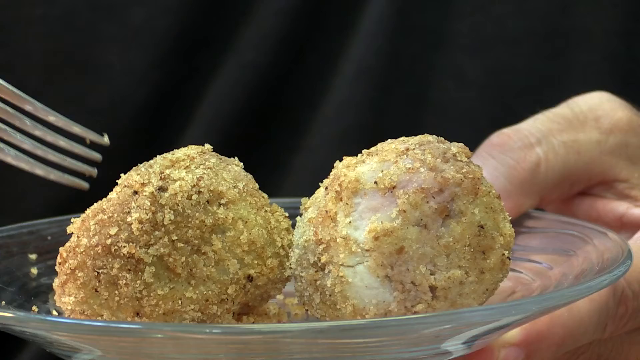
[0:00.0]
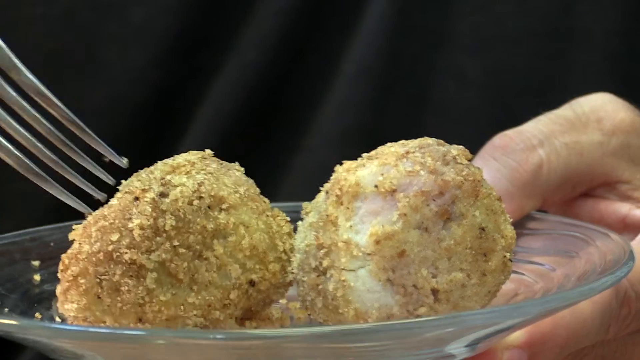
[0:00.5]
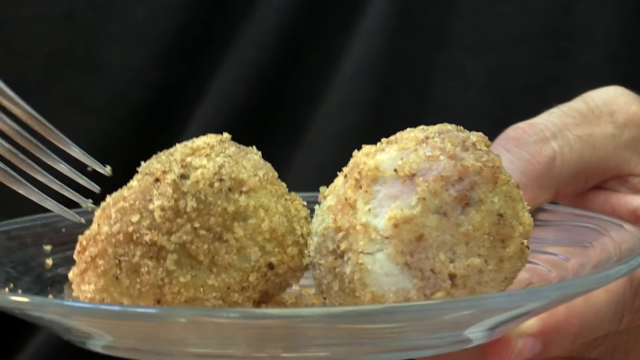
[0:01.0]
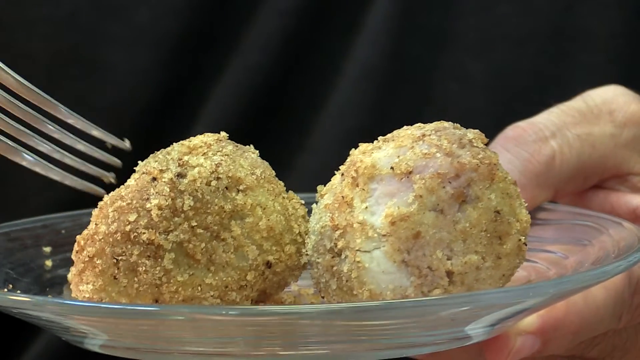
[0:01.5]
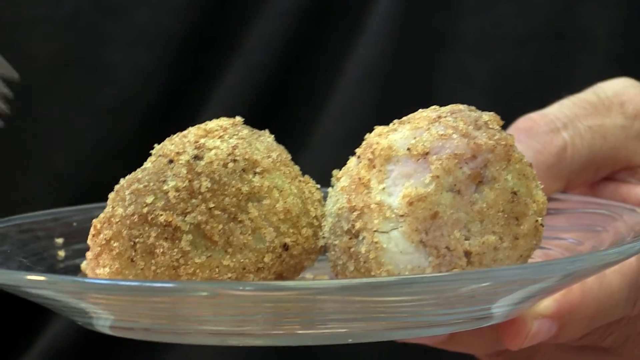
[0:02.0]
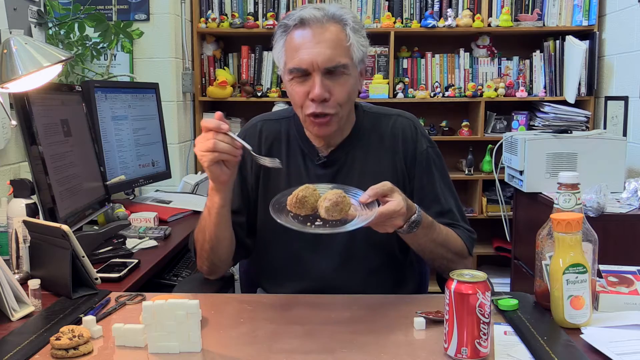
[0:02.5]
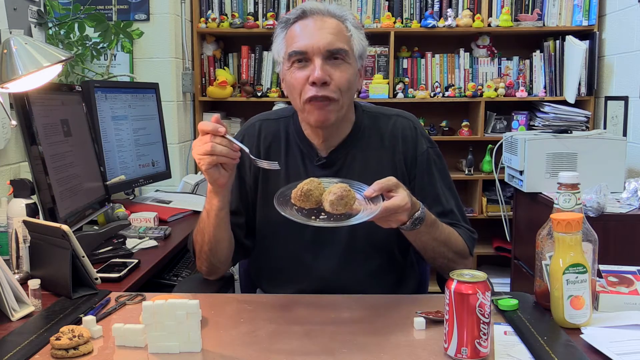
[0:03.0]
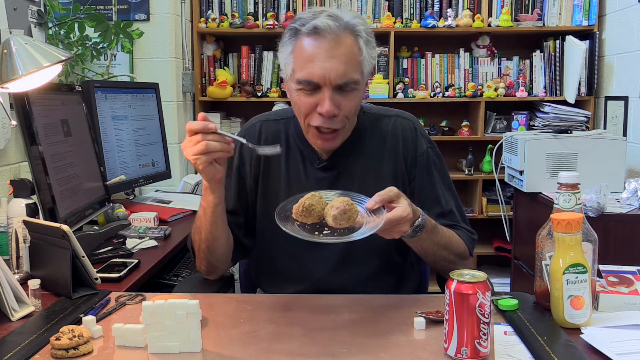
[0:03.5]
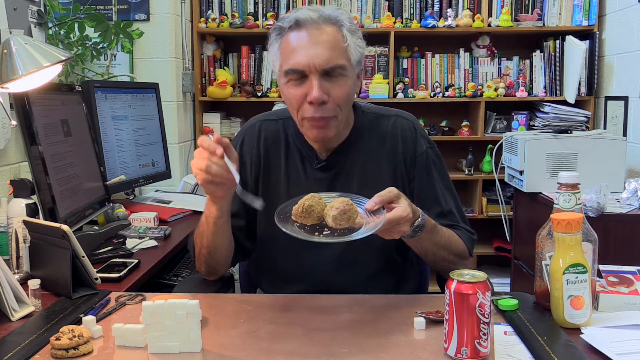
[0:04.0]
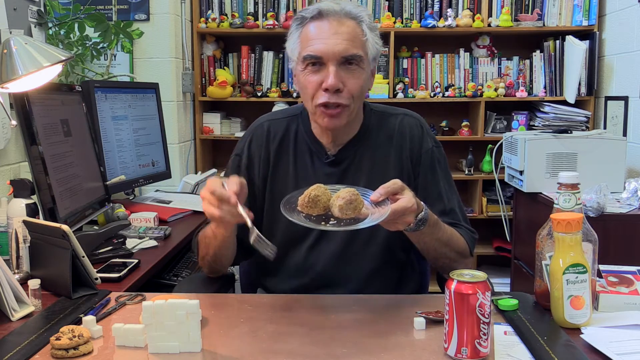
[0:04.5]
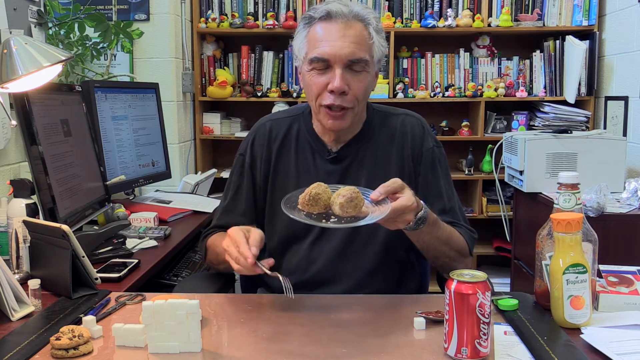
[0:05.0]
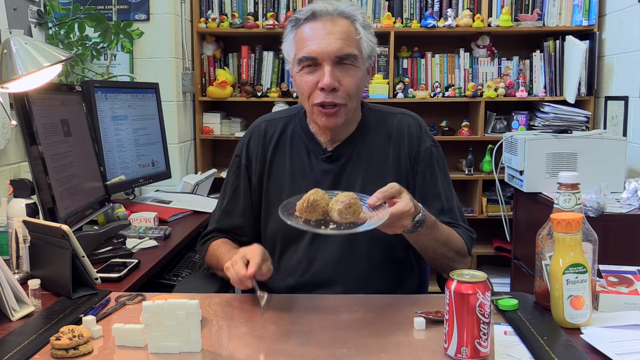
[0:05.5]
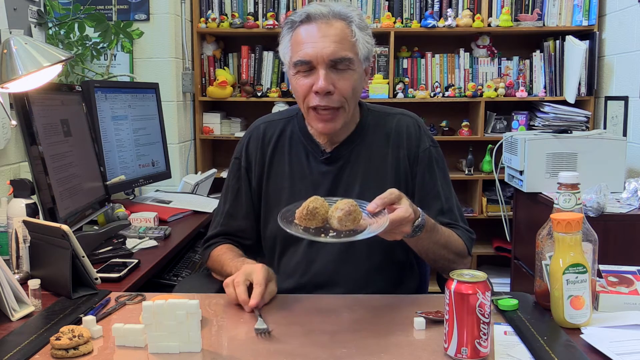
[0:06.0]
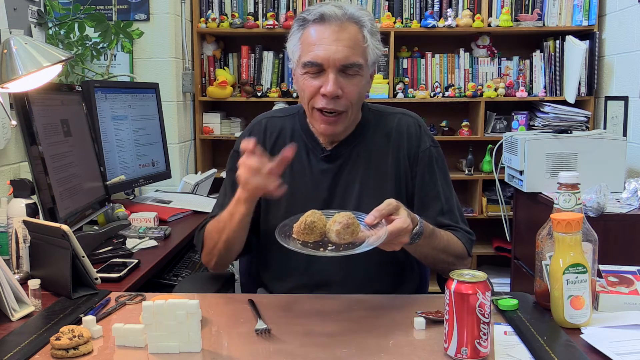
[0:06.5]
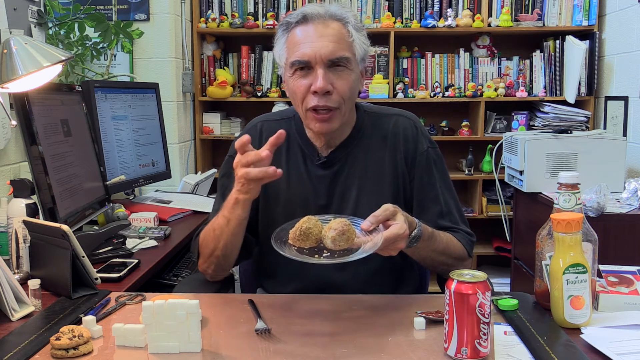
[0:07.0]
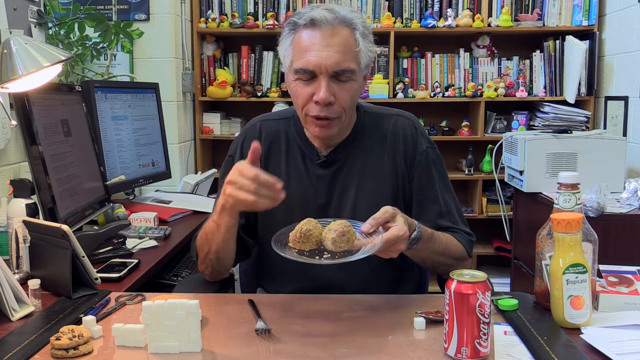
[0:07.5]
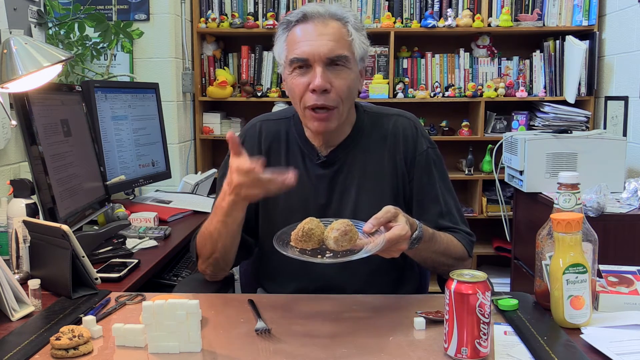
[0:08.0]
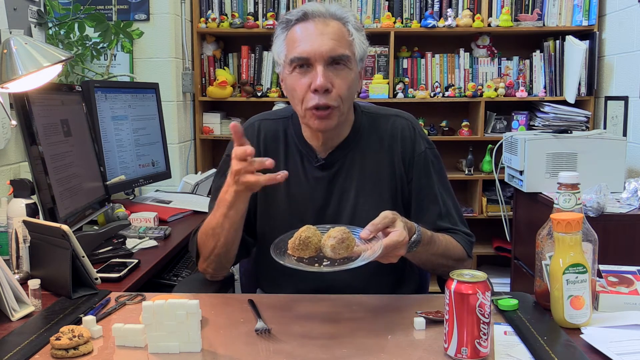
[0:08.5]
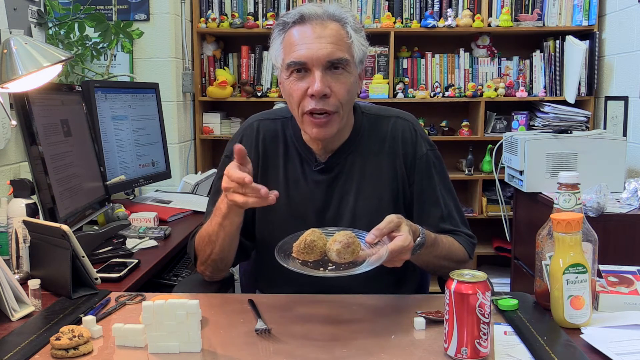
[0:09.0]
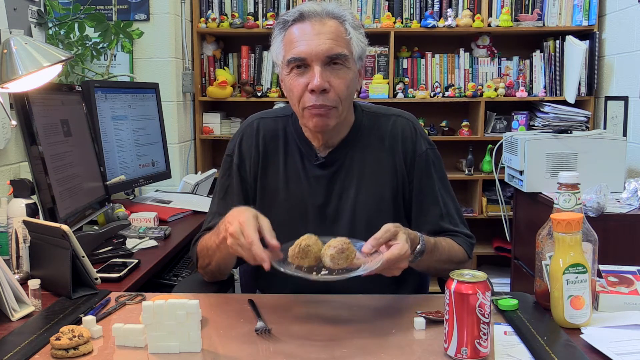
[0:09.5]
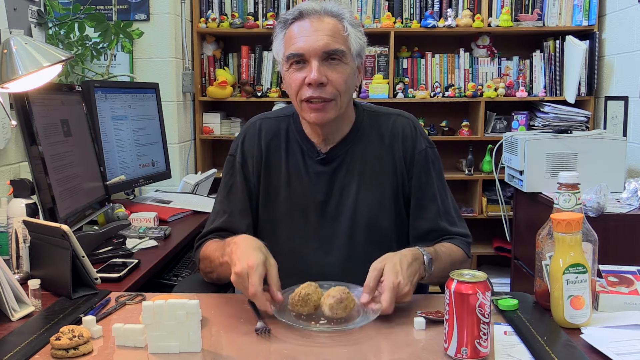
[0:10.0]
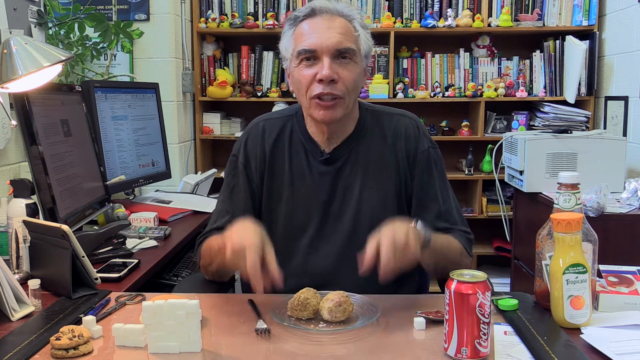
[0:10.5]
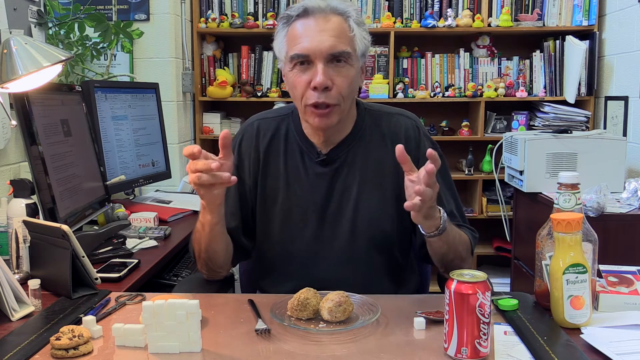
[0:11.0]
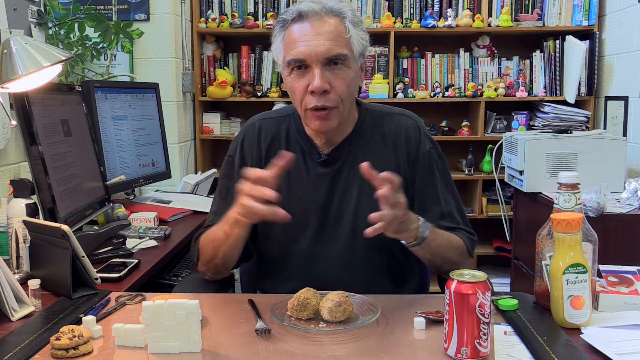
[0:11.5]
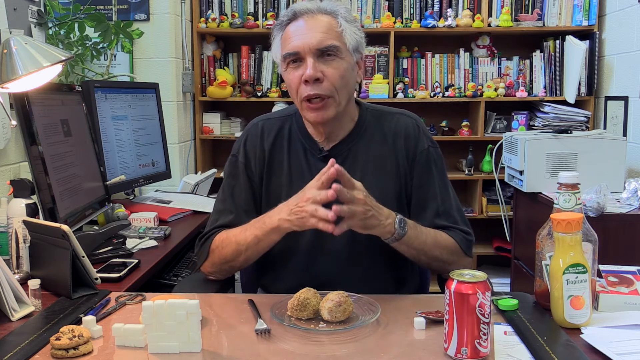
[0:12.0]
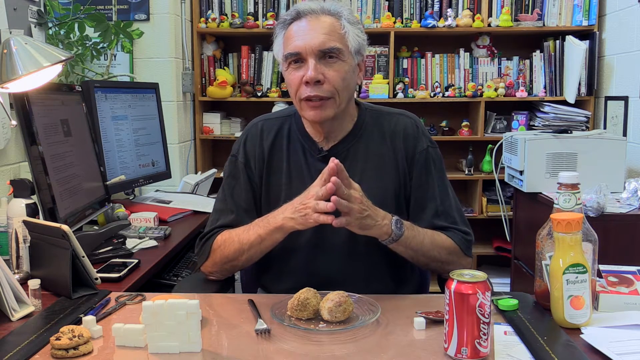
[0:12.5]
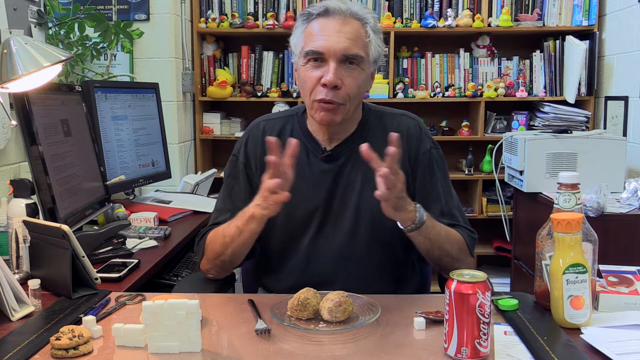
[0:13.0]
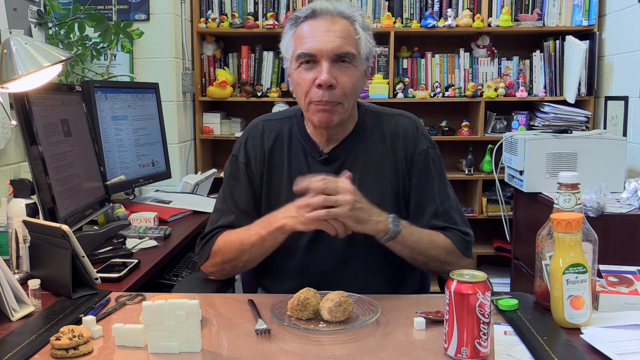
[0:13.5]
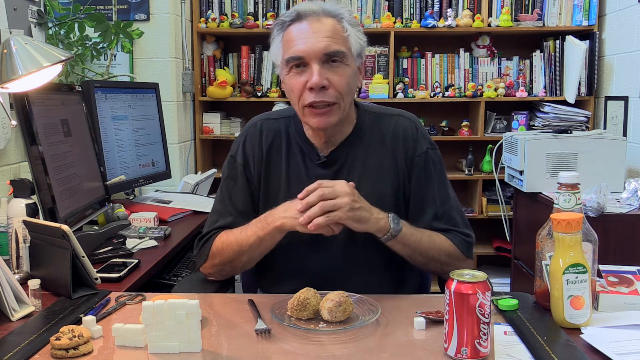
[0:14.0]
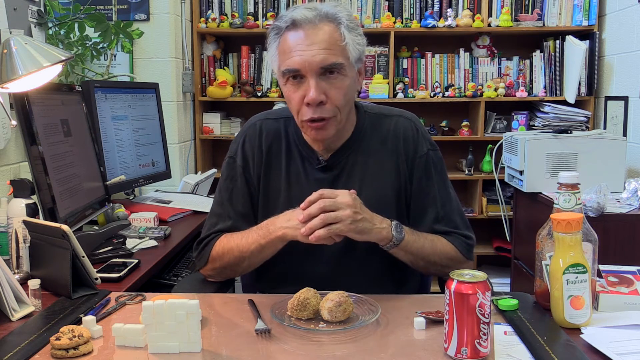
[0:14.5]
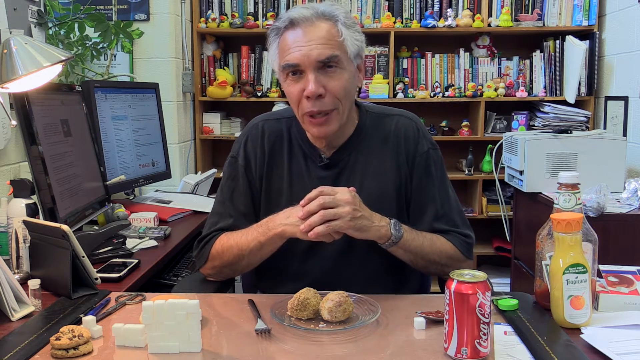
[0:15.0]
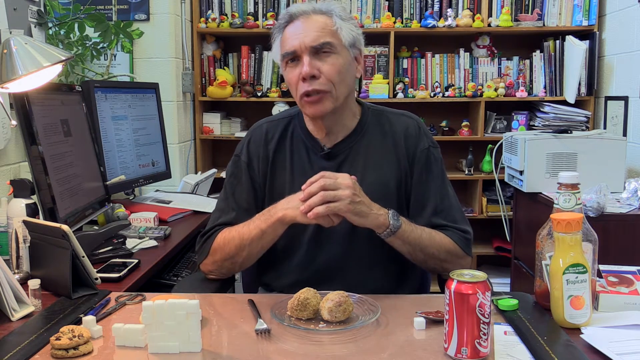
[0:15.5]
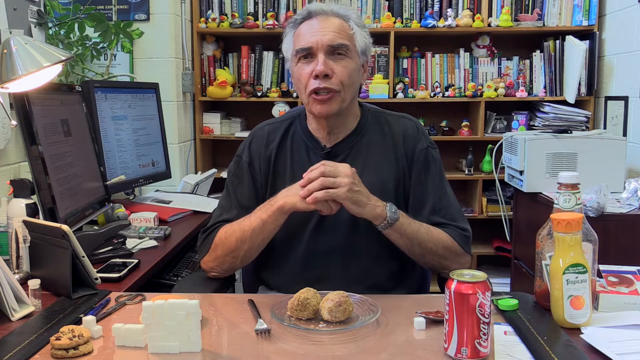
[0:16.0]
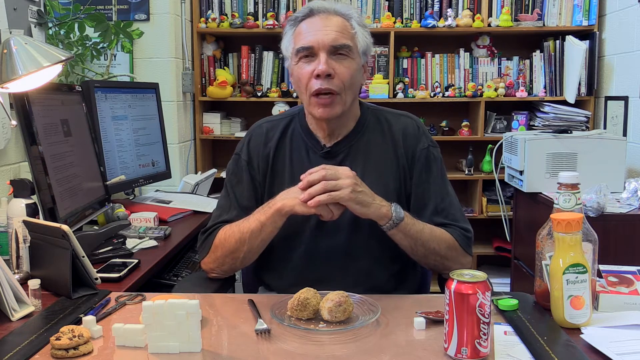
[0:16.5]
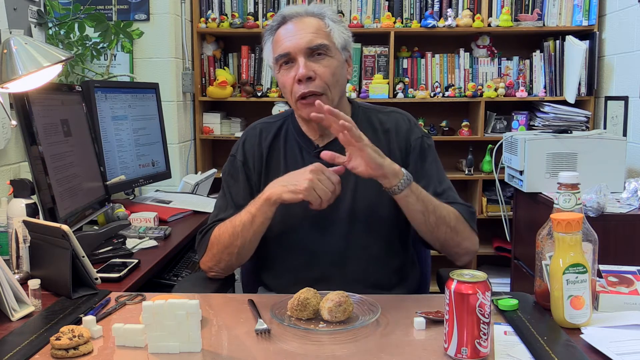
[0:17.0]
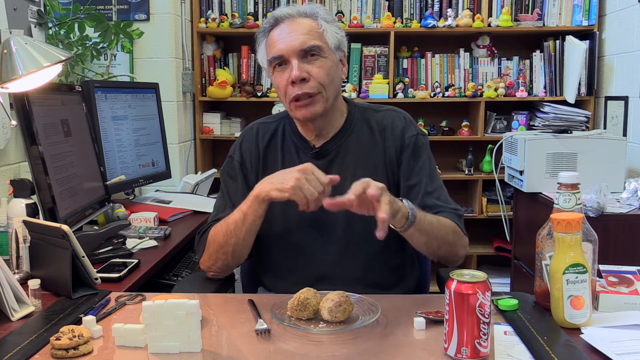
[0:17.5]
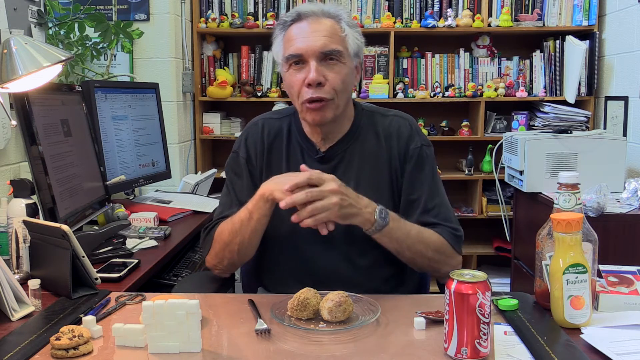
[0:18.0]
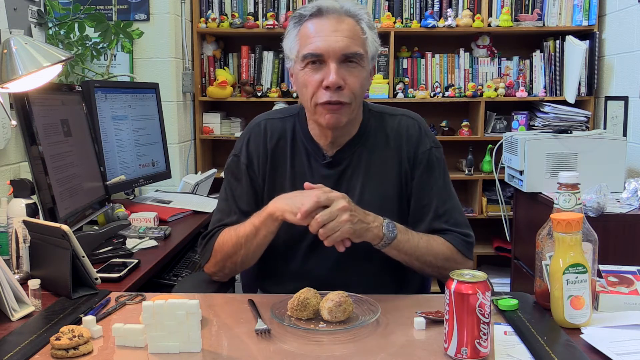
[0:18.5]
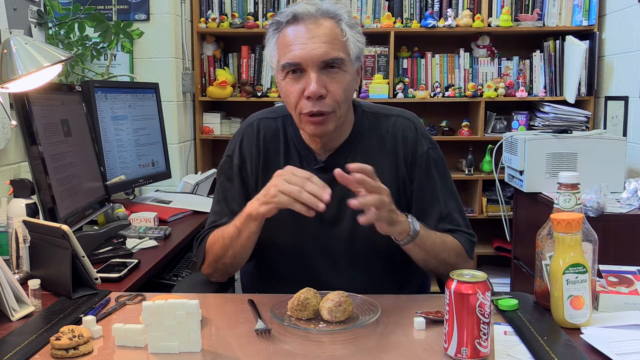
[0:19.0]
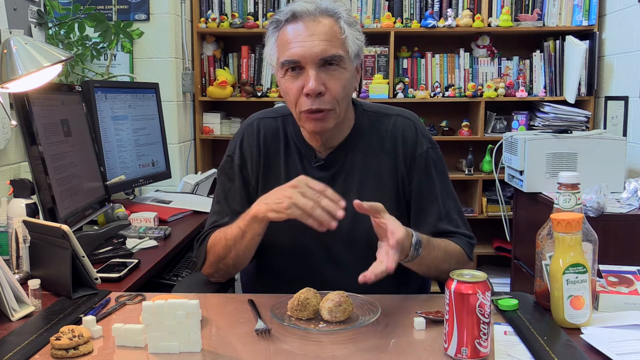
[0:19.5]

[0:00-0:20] The video opens on a screen showing someone wearing something black, either a black napkin or a black shirt, as part of their attire. A very close-up shot shows something that looks like a ball of some sort with breadcrumbs on it. The person holds the plate in one hand and a fork in the other, and appears to be white-skinned. The plate is clear and appears to be some type of glass. The person uses the fork to hit one of the items. Then a man appears at computers, with a bookshelf around him in a very disorganized space. There is a phone, cookies, Coca-Cola, a printer and an orange juice, with several books in the background. He talks to the viewer, shaking his head. The man appears to be of Asian descent. The back of his shelf holds a lot of ducks of different varieties; most are yellow, but there is also one that is green and red and blue. A flower is in the room to the left, all the way at the back of the office.